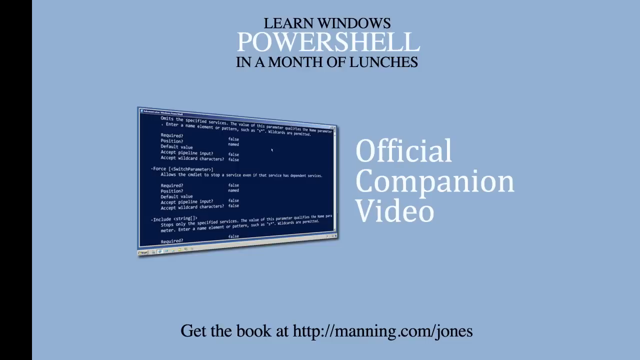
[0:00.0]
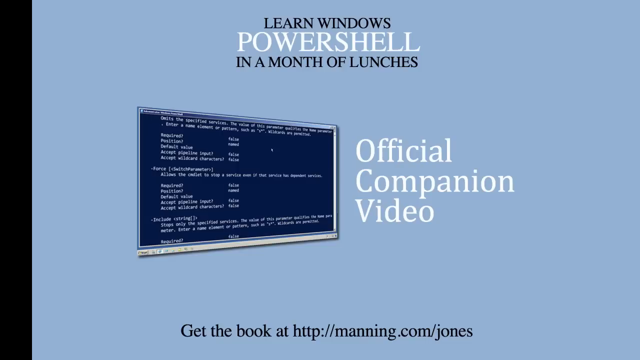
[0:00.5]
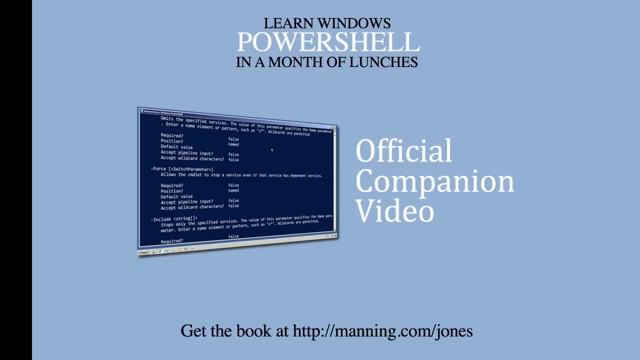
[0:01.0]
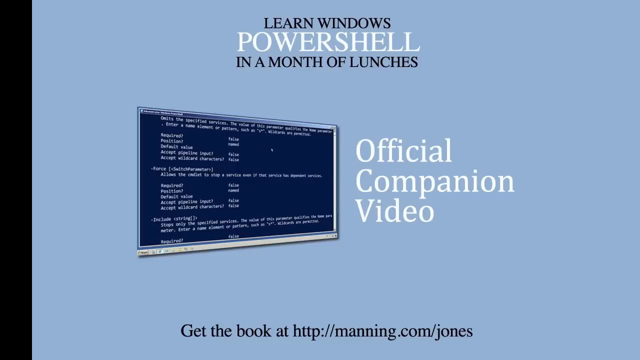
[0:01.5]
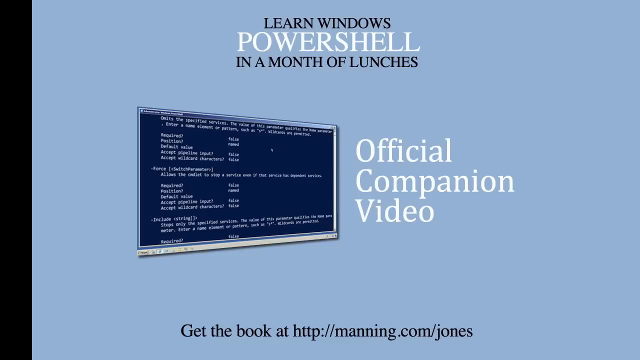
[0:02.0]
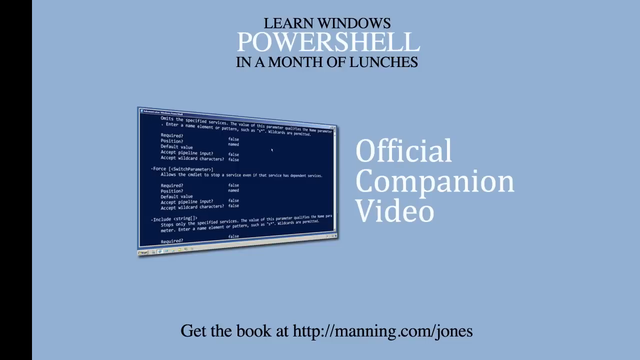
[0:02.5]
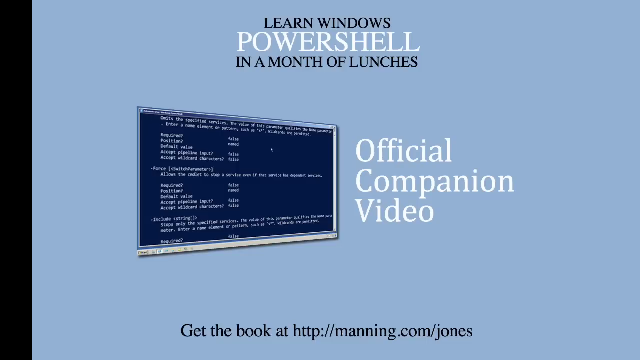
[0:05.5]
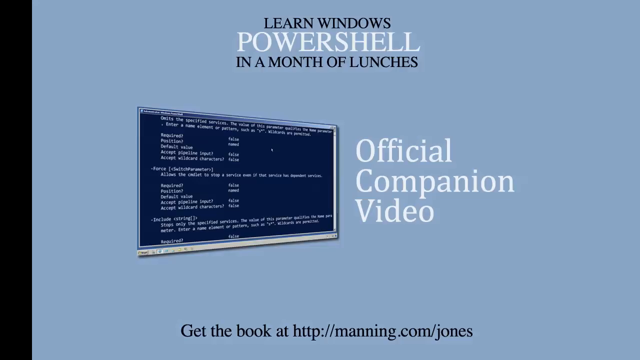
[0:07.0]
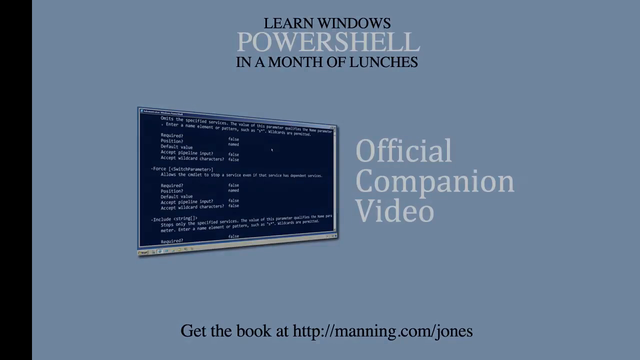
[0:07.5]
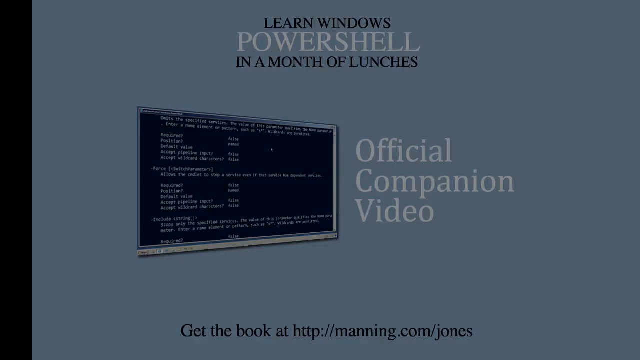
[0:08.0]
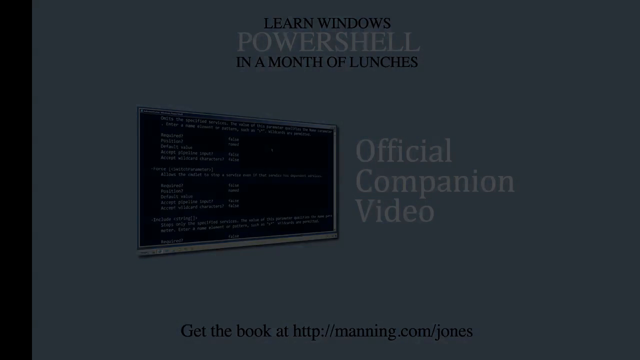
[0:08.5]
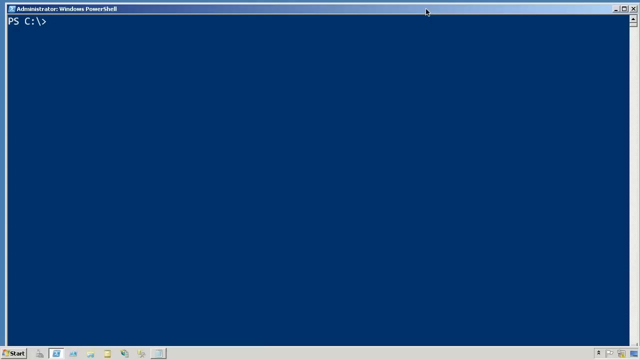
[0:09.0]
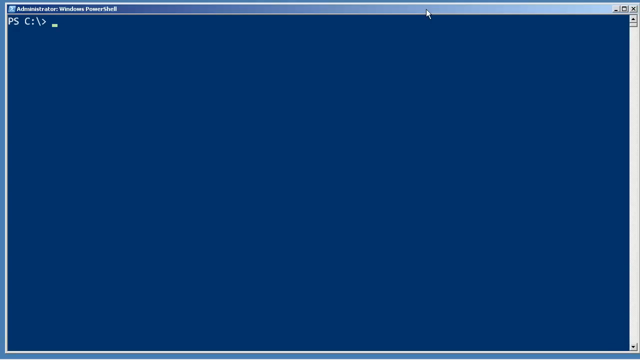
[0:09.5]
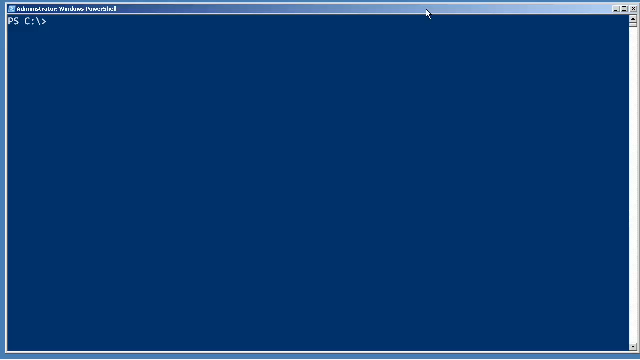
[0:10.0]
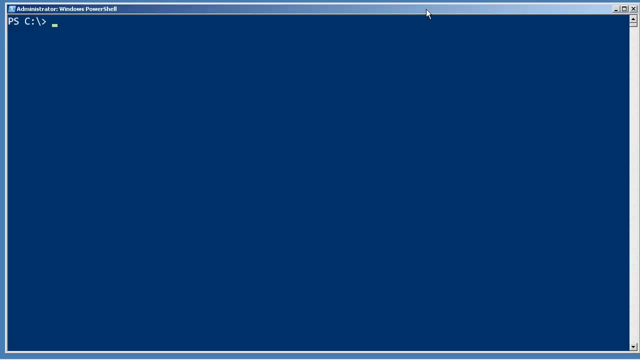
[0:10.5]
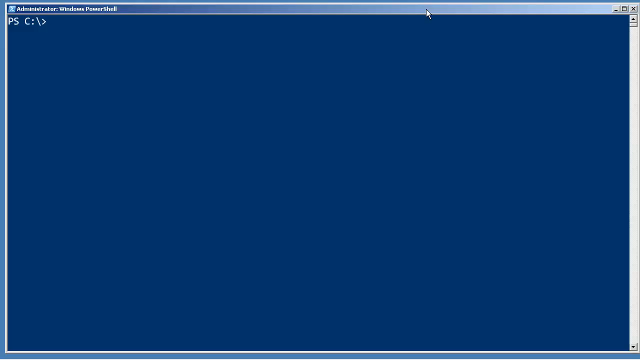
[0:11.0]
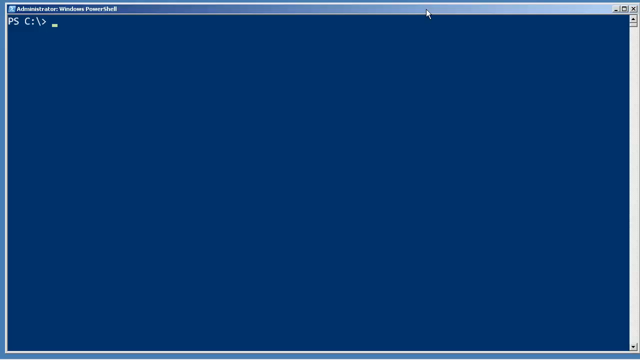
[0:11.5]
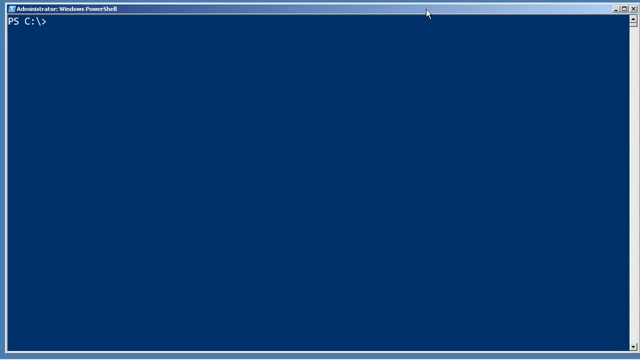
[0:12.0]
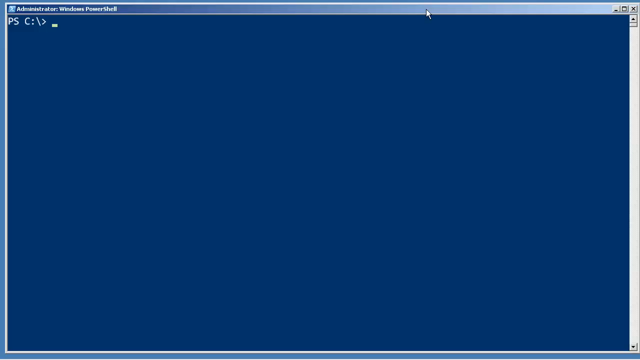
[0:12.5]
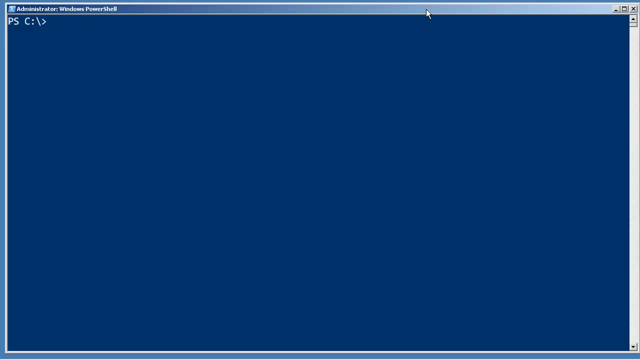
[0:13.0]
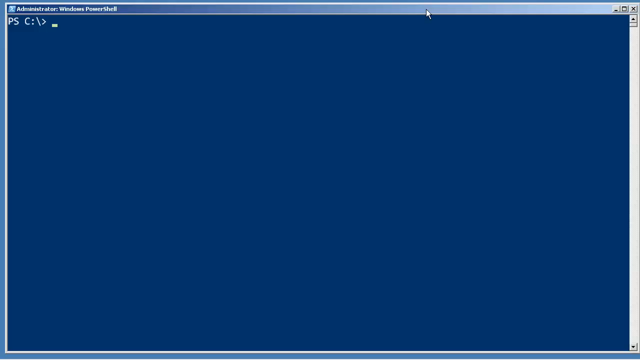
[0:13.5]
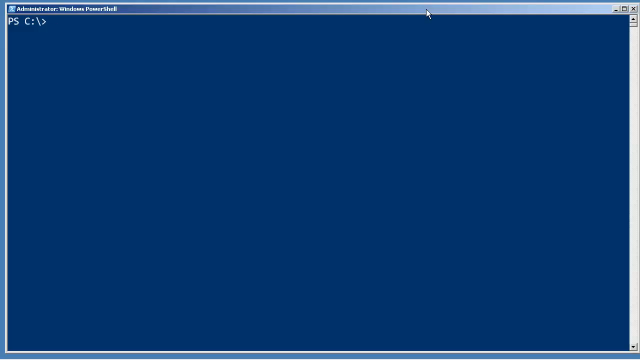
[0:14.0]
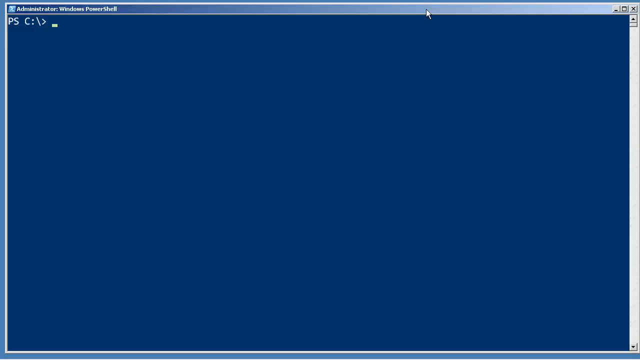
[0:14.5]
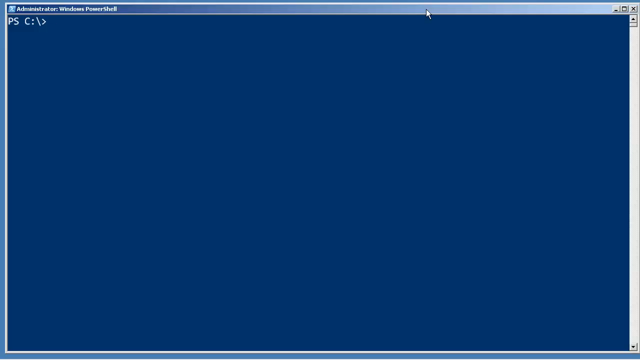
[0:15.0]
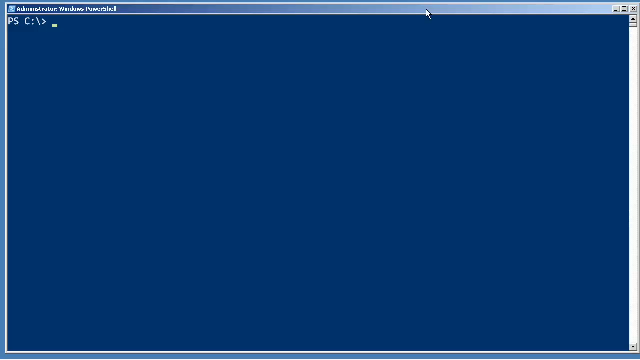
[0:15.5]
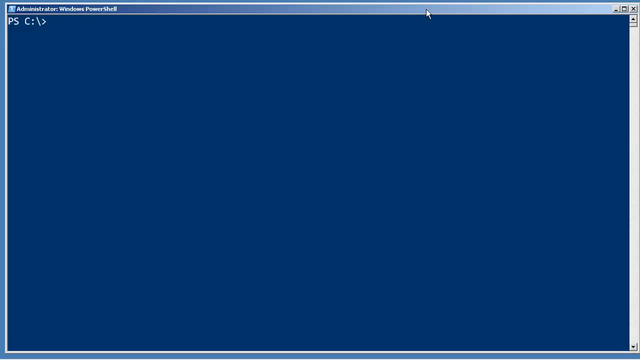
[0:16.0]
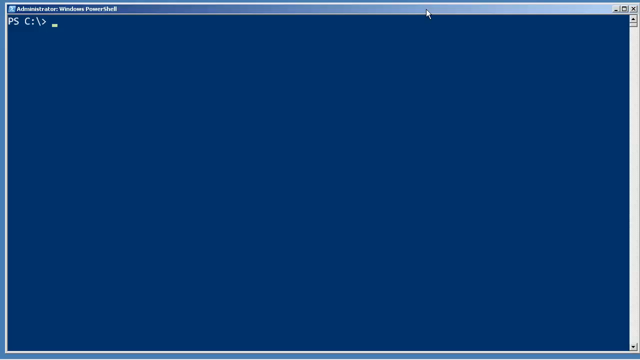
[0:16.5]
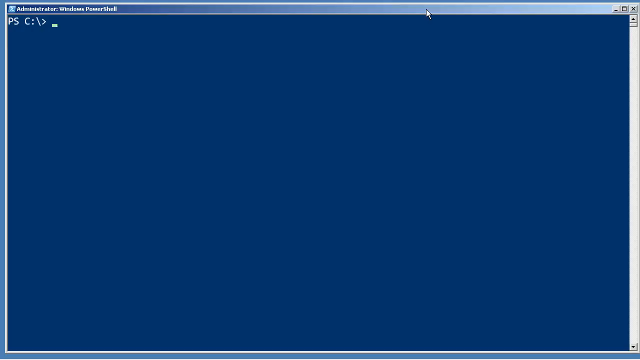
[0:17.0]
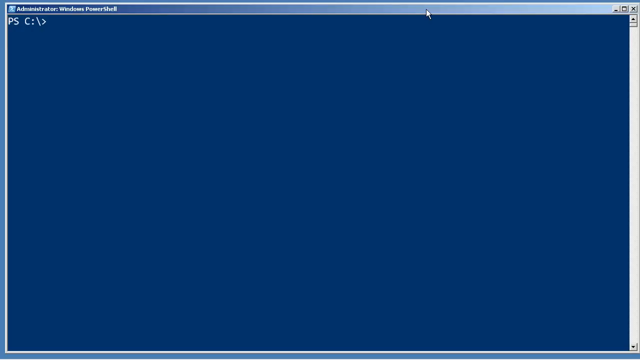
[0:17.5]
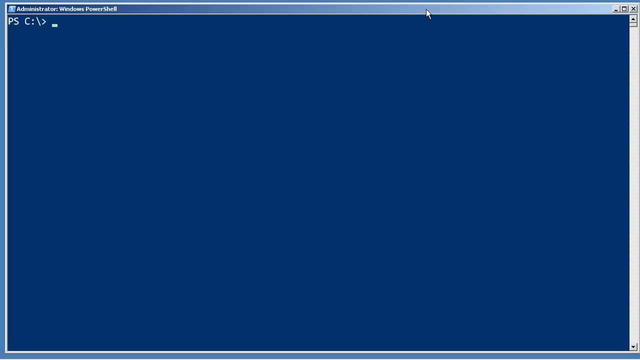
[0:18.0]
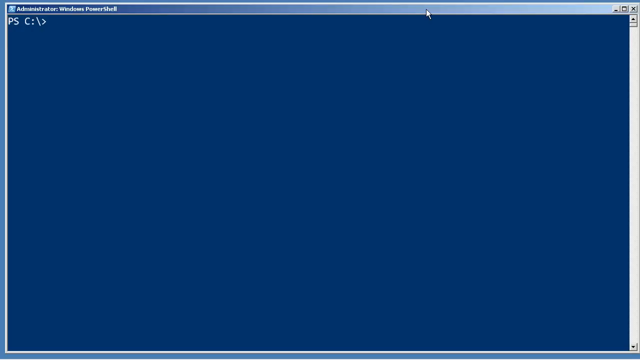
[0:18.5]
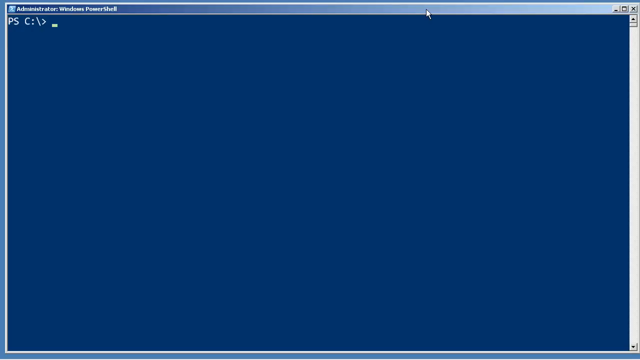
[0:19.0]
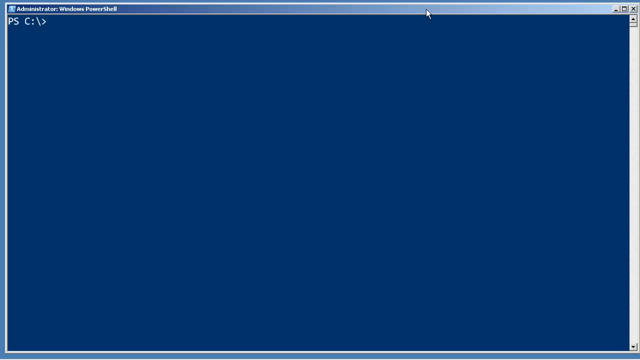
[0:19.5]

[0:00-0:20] On the left side there is apparently a vertical black area. Text in black reads "learn windows," and text in white reads "PowerShell." Underneath, black text ends with "a month of lunches," and white text reads "official companion video." A rectangular box with white words too small to read appears as well. The screen then clears and the background changes to a navy blue color, with white text beginning with "ps" followed by a slash and a closing bracket. The rectangular navy blue box seen beside "official companion video" seems to have been a preview of this same box, in which the person has just started typing the first few letters and symbols.